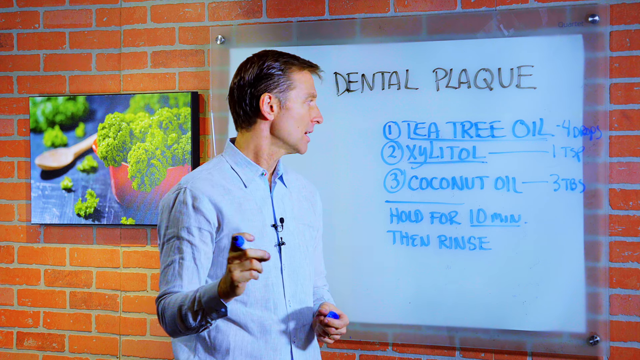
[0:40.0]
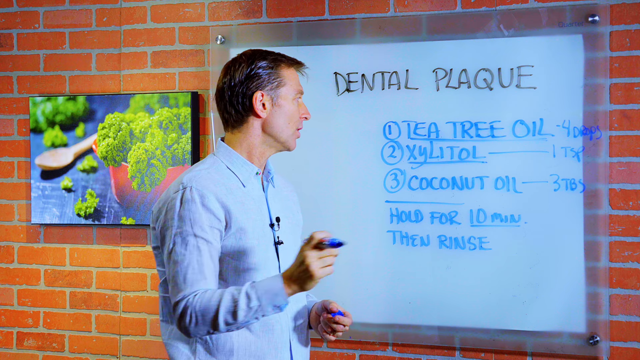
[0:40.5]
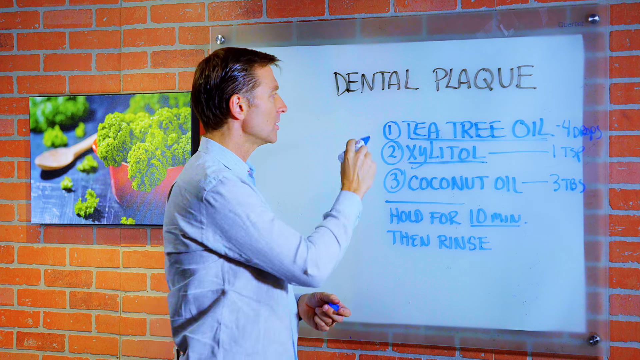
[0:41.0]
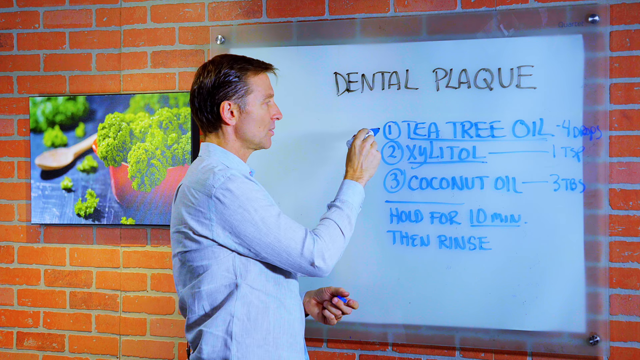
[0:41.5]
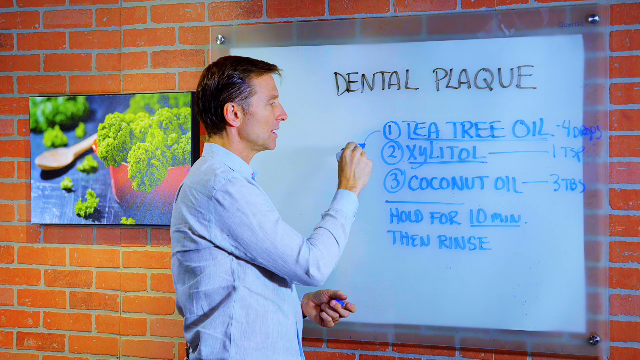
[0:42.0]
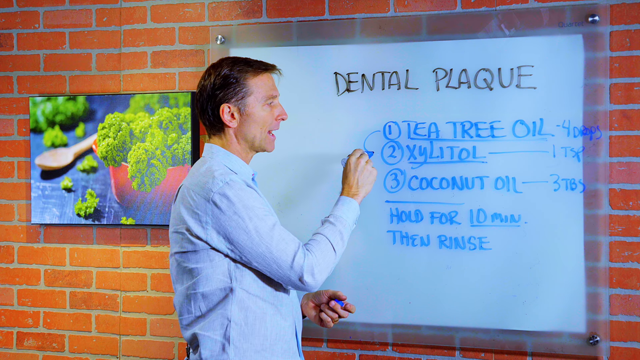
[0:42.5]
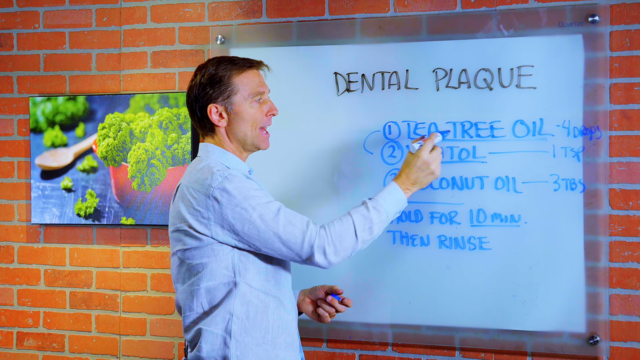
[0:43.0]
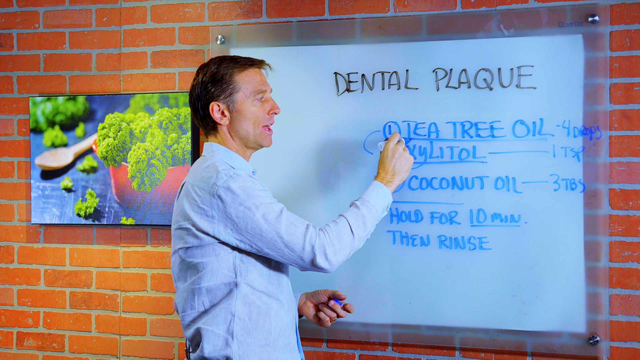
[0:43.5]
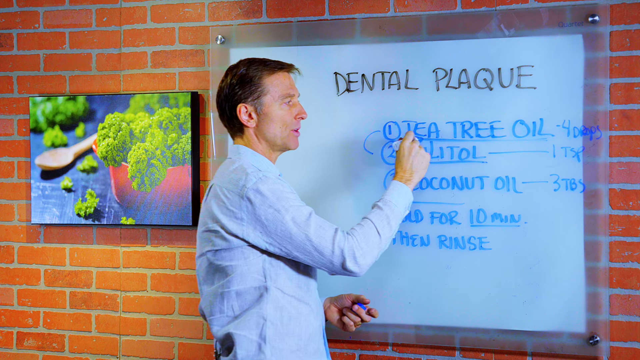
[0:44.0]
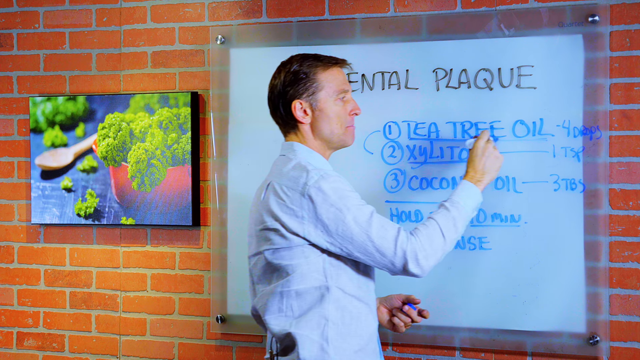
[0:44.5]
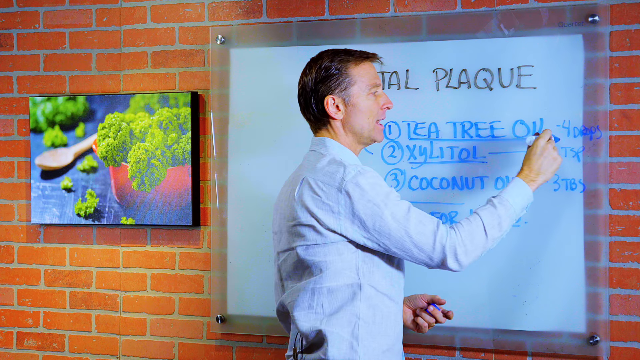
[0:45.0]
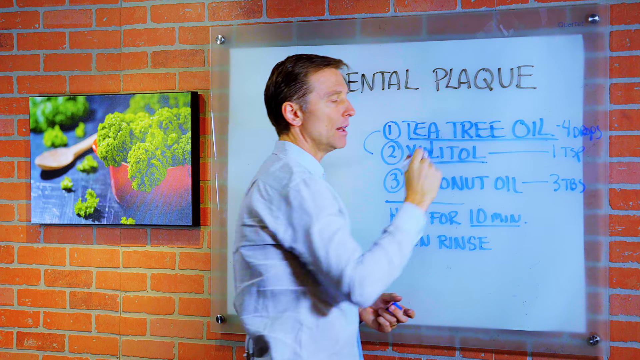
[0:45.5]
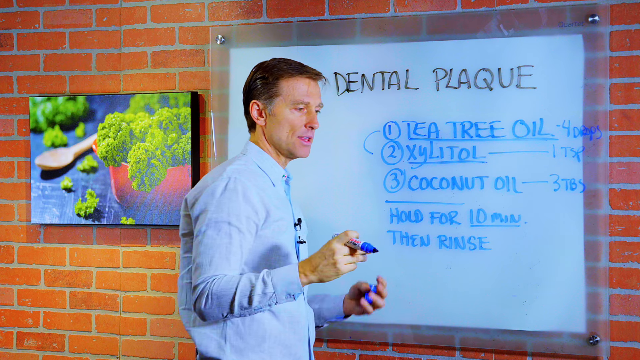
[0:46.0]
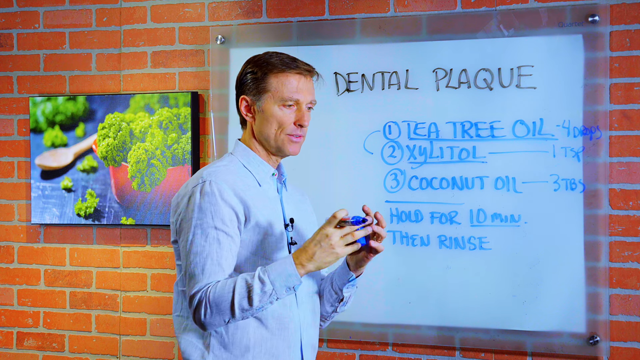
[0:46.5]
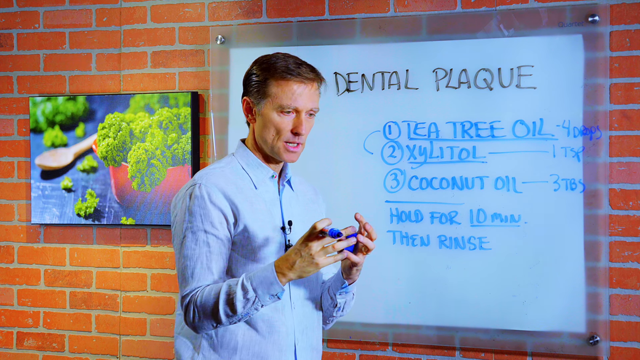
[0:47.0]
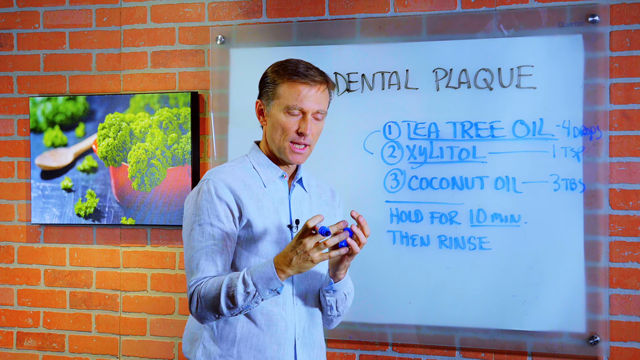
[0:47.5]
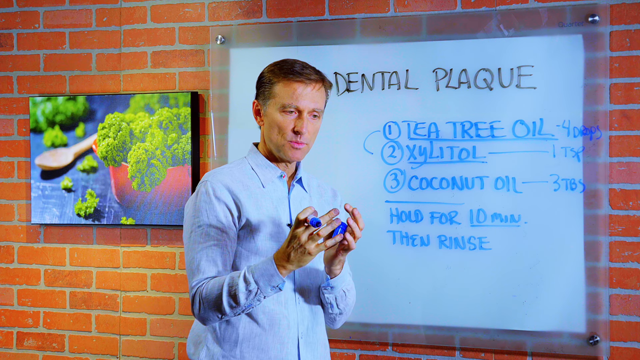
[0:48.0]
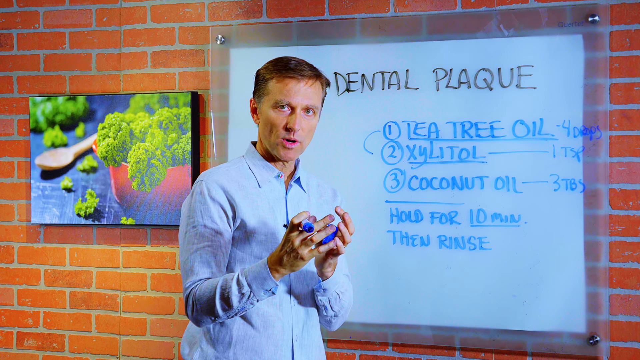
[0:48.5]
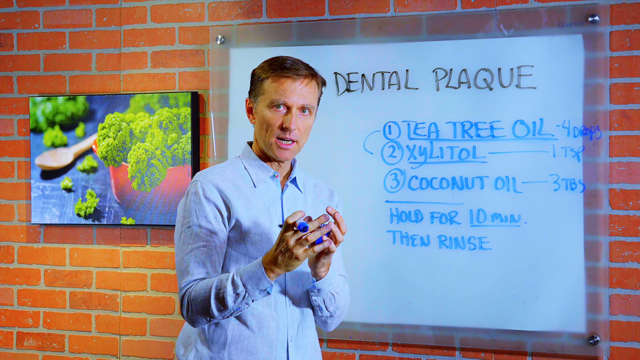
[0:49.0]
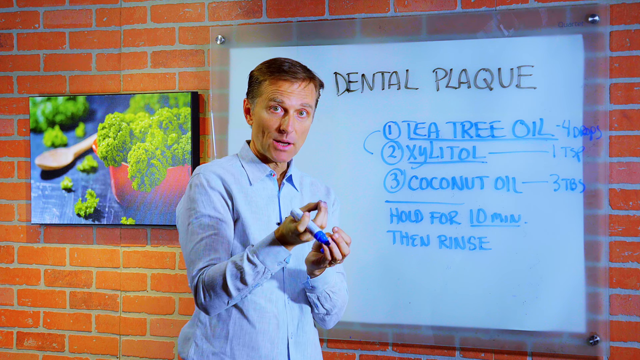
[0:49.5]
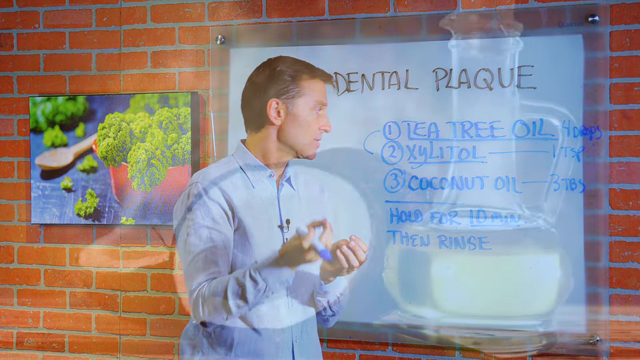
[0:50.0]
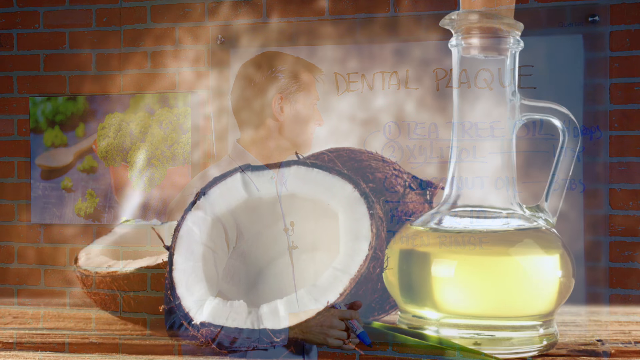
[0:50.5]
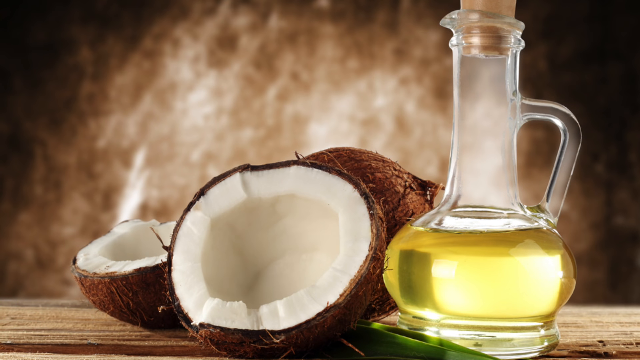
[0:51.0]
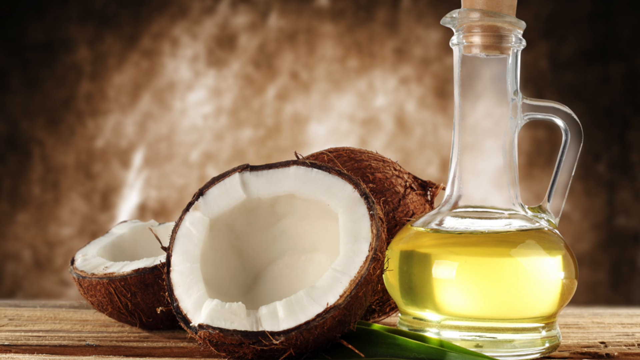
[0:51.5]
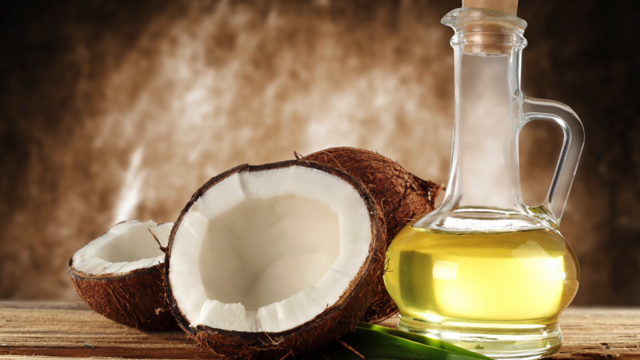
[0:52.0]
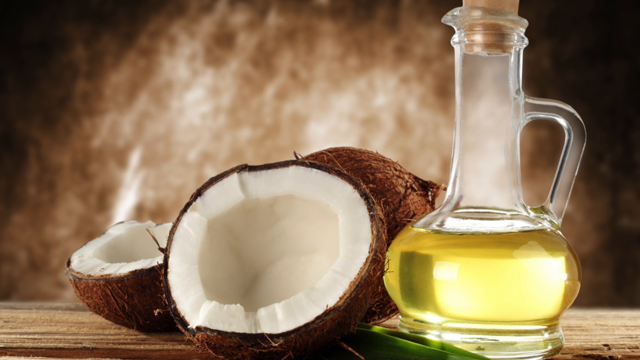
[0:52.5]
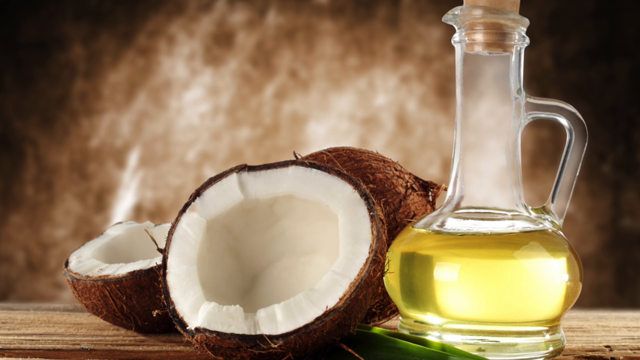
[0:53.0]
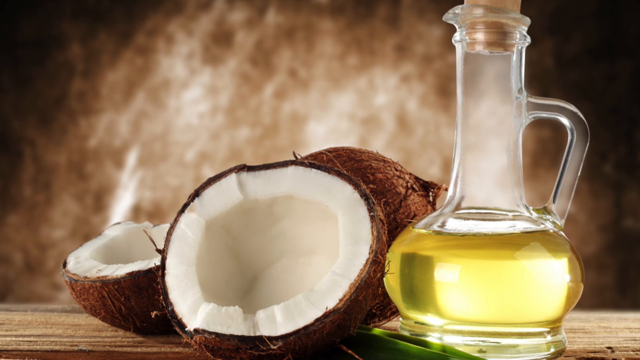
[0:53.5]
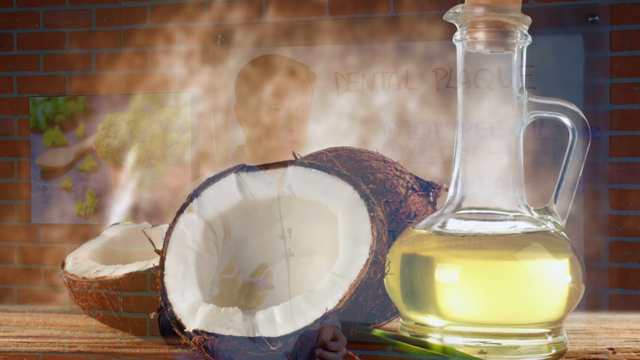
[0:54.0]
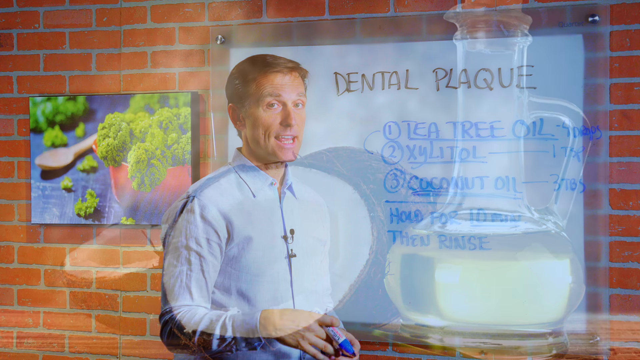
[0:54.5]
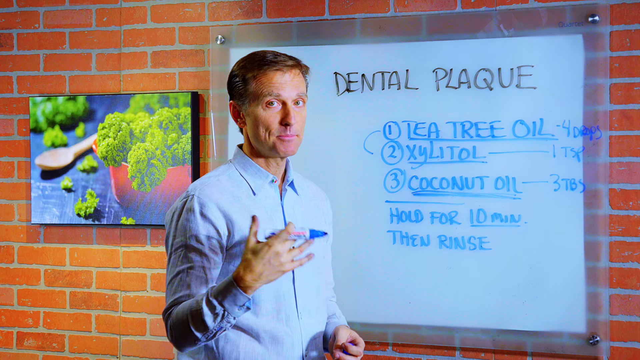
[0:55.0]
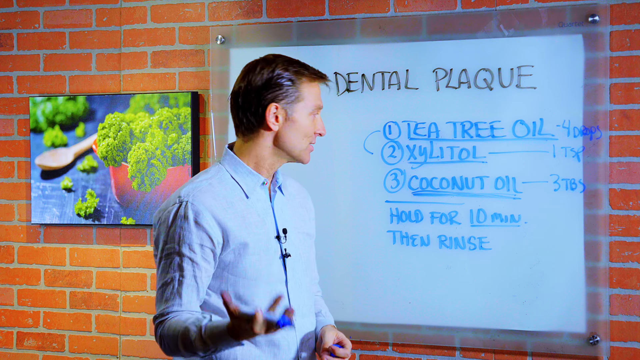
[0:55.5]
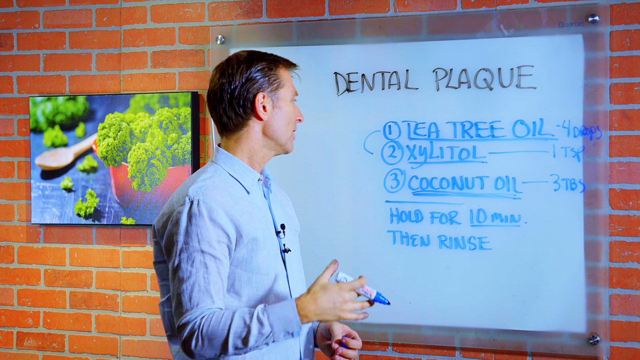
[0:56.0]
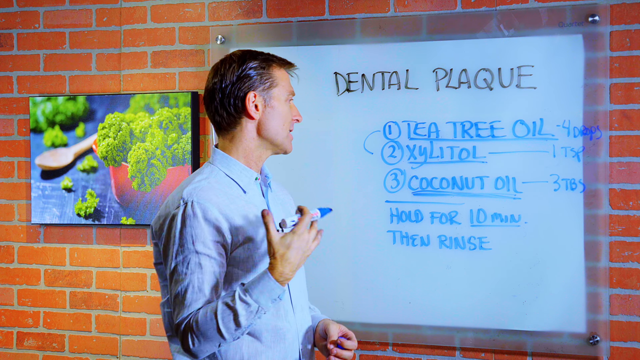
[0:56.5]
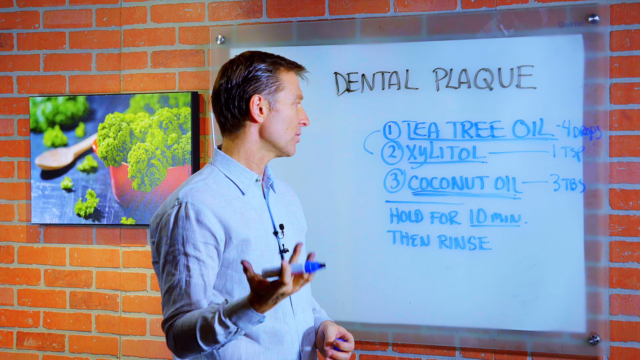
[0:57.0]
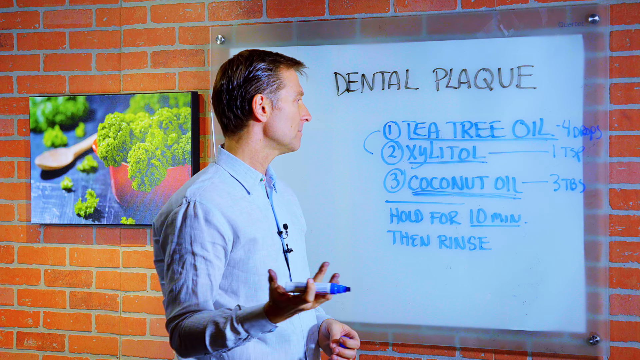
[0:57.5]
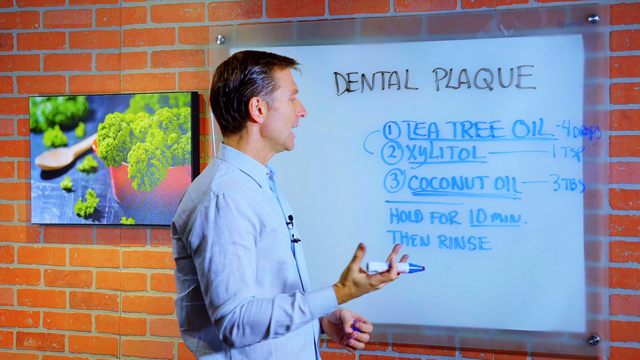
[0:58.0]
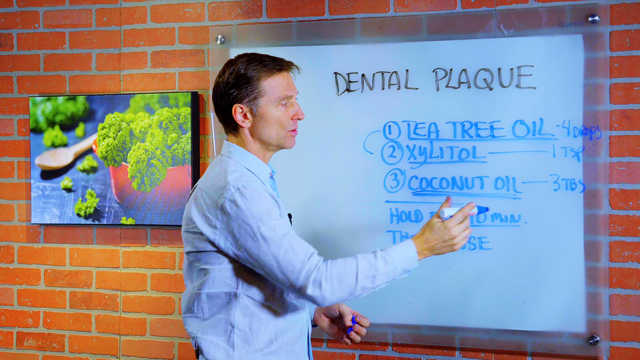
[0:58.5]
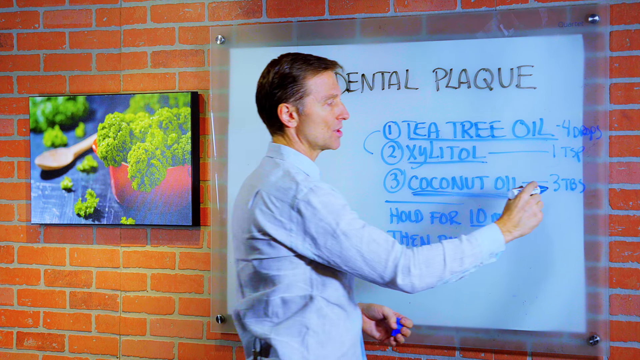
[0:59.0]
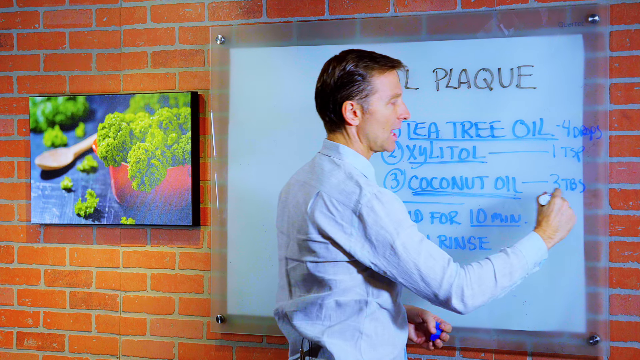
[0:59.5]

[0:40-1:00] The man holds a marking pen in his right hand and stares at the wall board listing tea tree oil, xylitol and coconut oil for preventing dental plaque. He points toward the number one ingredient, tea tree oil, draws a line to number two, xylitol, and then underlines tea tree oil again. He turns to the side and speaks using both hands, fingers facing each other, sort of as if grasping something in the air. The image switches to two coconuts, the one in the foreground split in half to show the white meat of both halves; to the right of the coconuts is a bottle with a cork top and a handle, containing yellow cooking oil. The video returns to the man speaking while holding a blue marker pen; he looks at the board and underlines "3 tablespoons" on the third line, for coconut oil.